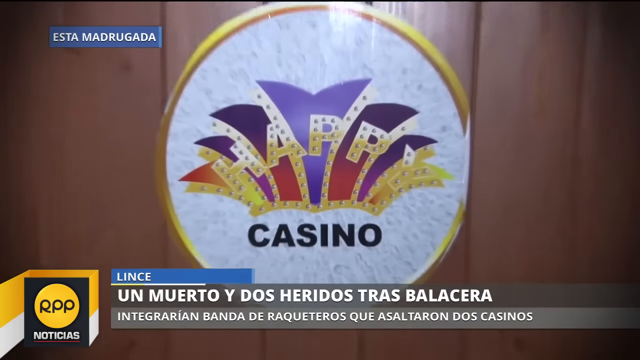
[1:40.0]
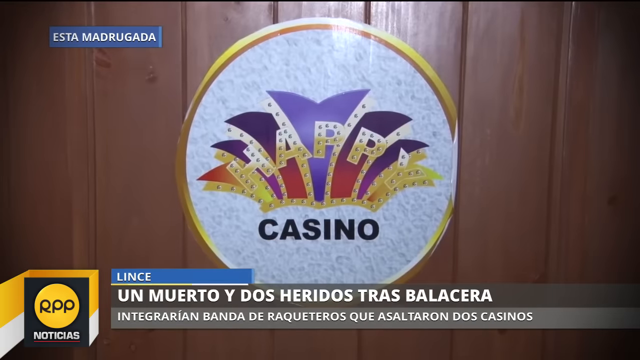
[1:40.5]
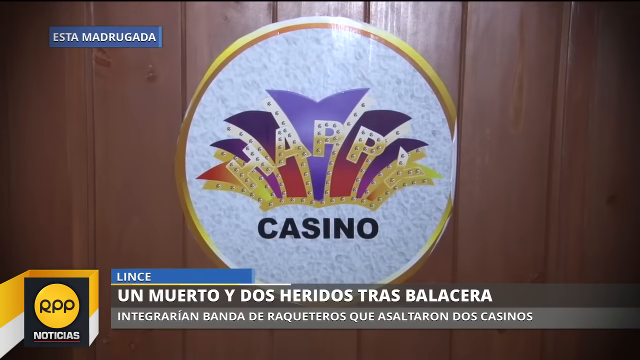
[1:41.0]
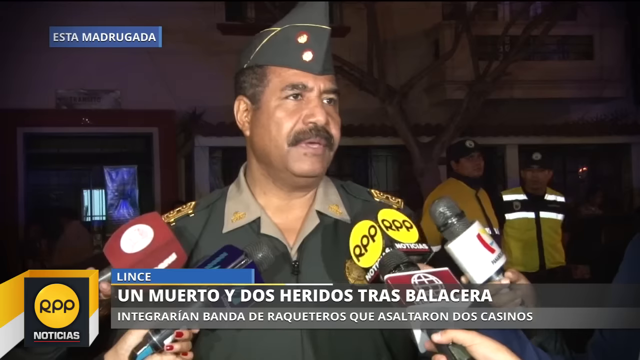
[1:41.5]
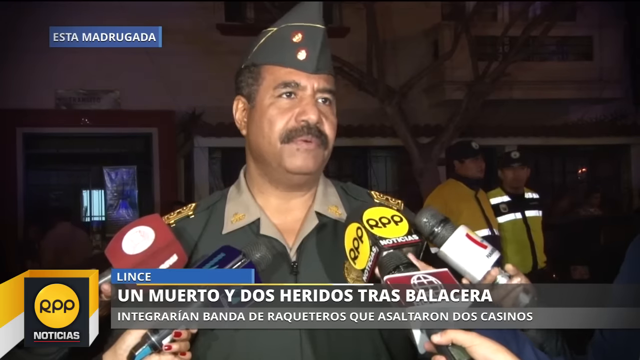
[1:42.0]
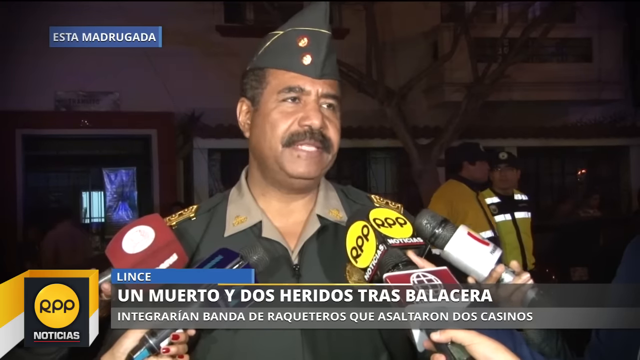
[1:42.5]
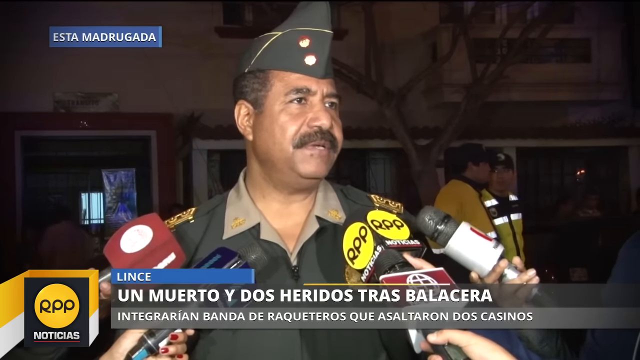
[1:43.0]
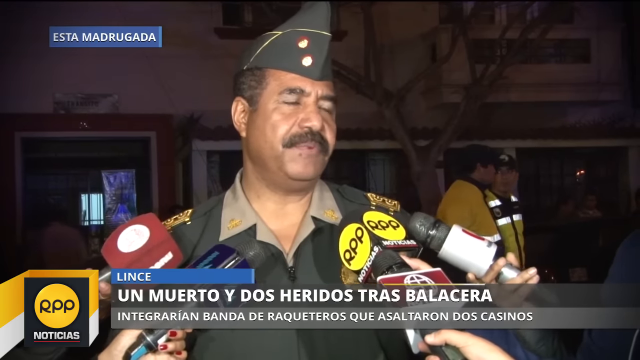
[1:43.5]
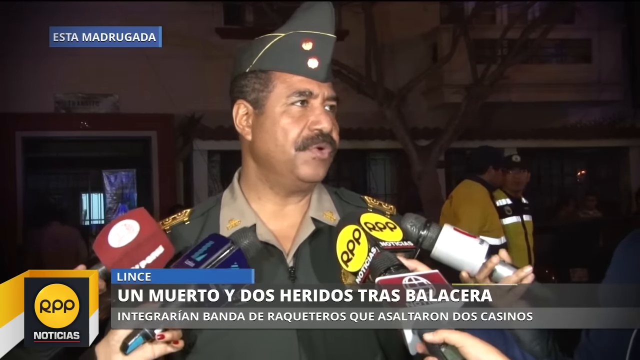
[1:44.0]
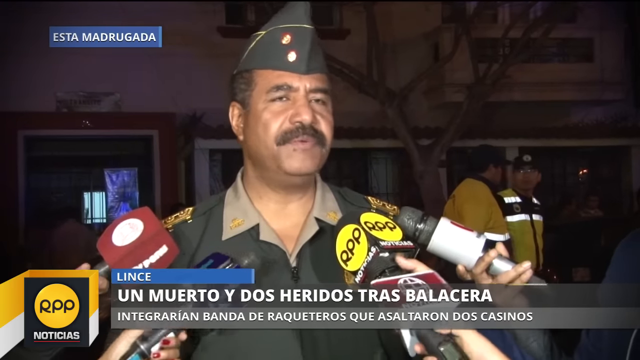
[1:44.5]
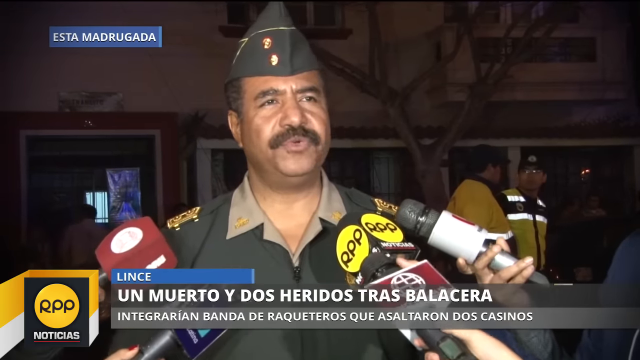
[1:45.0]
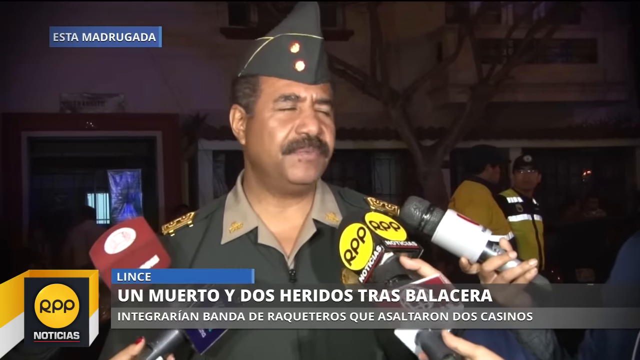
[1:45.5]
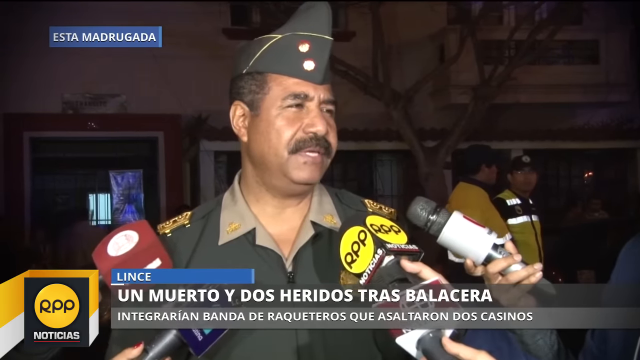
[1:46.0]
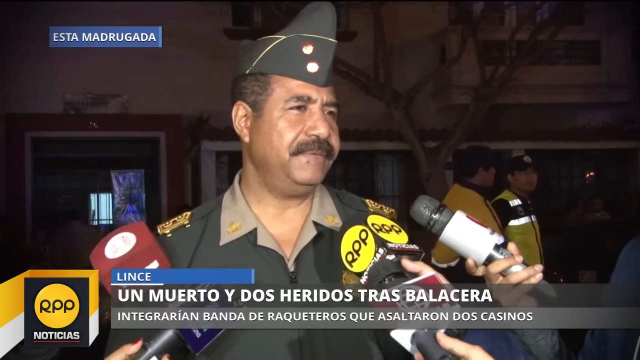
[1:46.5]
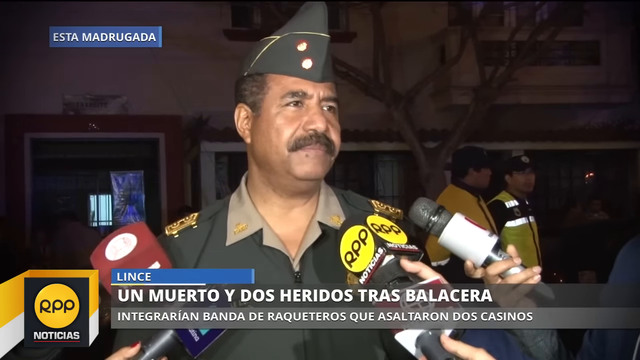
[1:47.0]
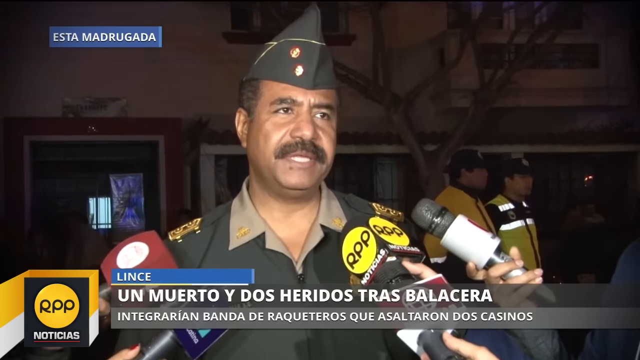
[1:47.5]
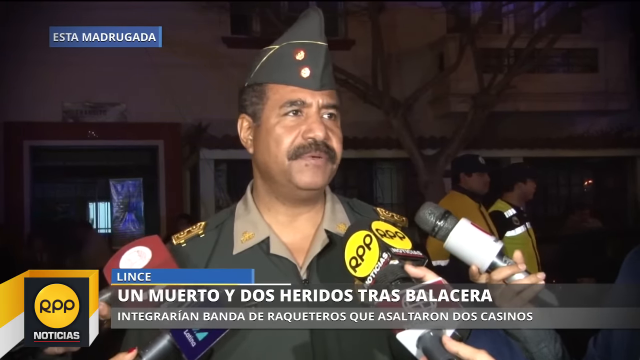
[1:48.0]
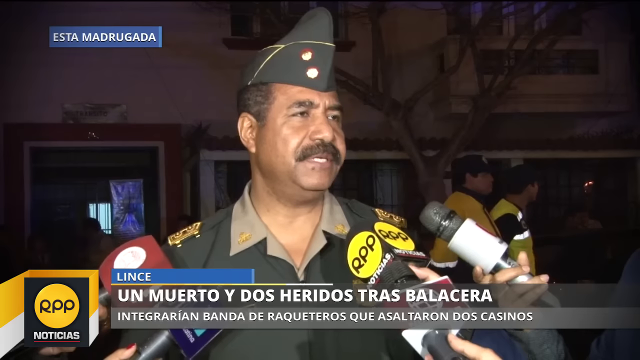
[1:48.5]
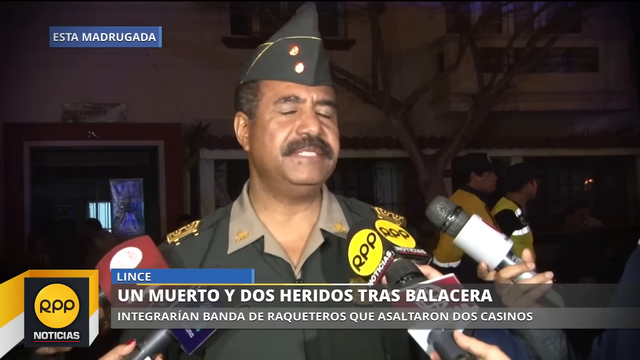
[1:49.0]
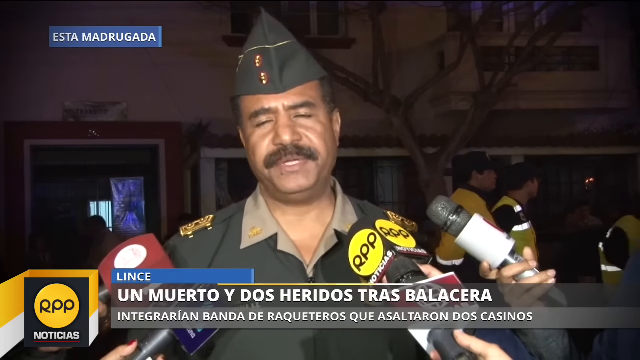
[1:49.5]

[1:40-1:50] A logo in the center of the screen says Happy Casino. It has a white background circle with a number of abstract marks in its white portion and a gold and red outline trim around the circle. In the center, "HAPPY" appears in yellow lettering with a number of studded marks in the word, with a floral fanning pattern in purple and red behind the lettering, and beneath it "CASINO" in black lettering. White lettering at the bottom of the screen gives information about the newscast, and on the left is the newscast logo "RPP" in black lettering on a yellow circle, with "NOTICIOUS" in white lettering underneath. The view zooms out from the casino logo. A dark-skinned man with dark brown hair and a dark brown mustache, in military fatigues and a green military hat, stands in front of a number of microphones, commenting on the scene. It is nighttime and a bright light is positioned on him. A number of storefronts are over his shoulder, and officials stand in the back, some in hazard vests, in front of a tree. He comments into the microphones as he turns left and right.